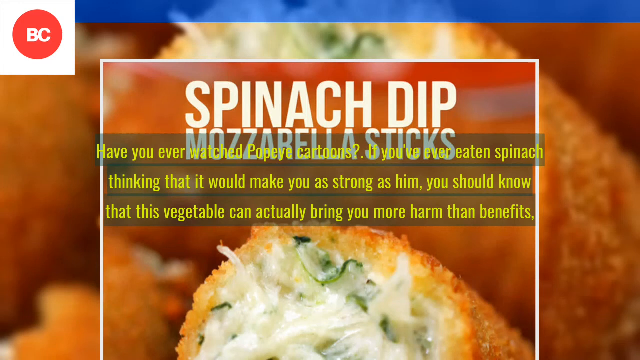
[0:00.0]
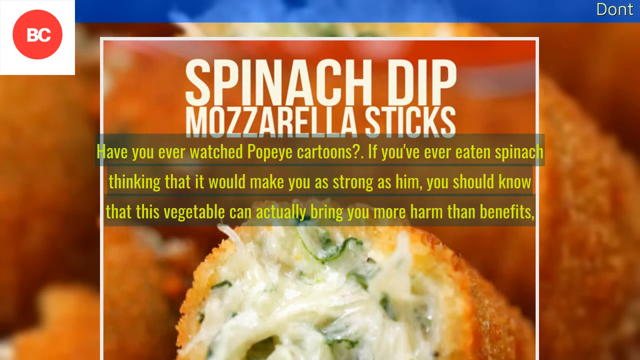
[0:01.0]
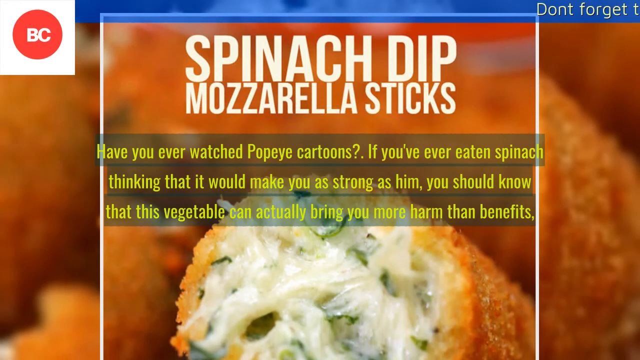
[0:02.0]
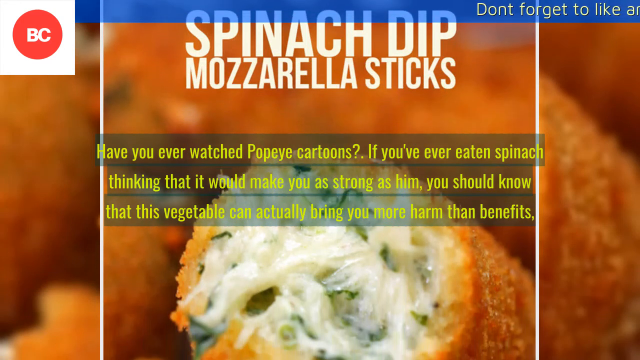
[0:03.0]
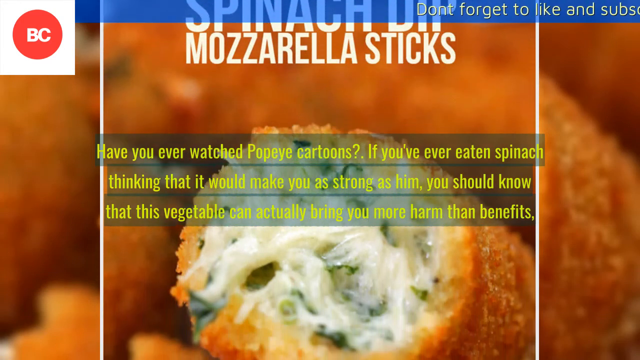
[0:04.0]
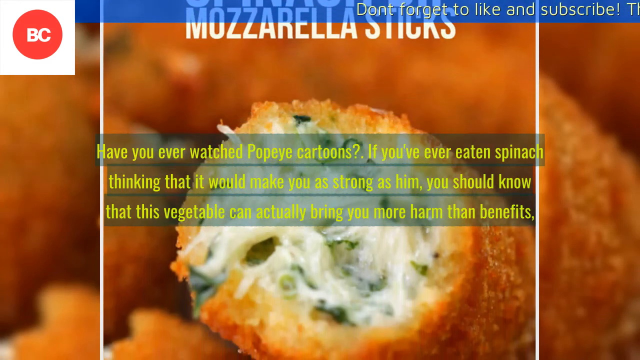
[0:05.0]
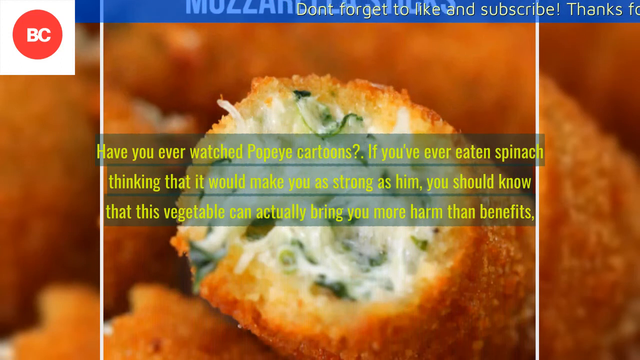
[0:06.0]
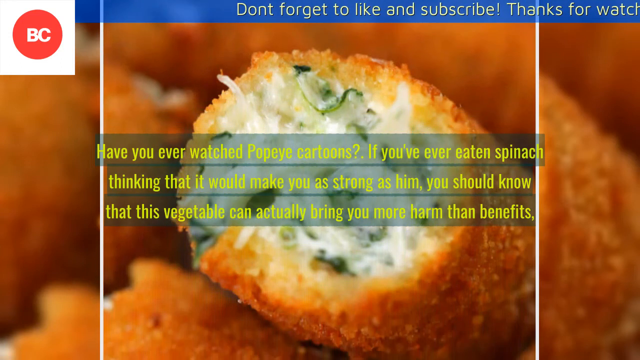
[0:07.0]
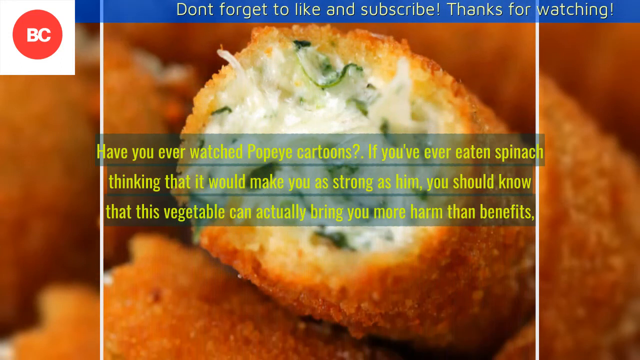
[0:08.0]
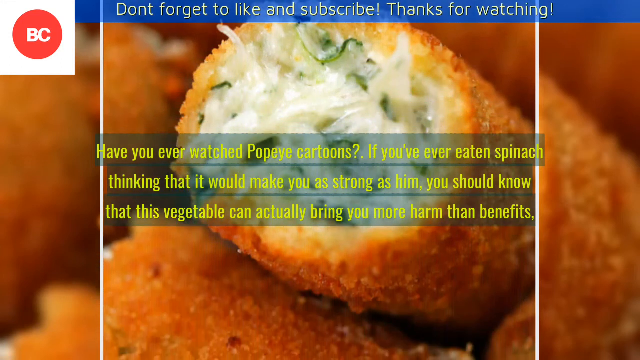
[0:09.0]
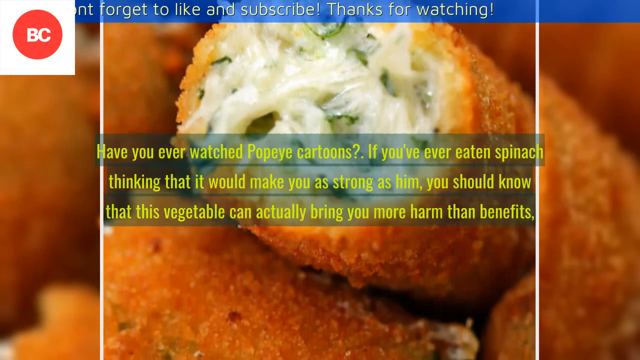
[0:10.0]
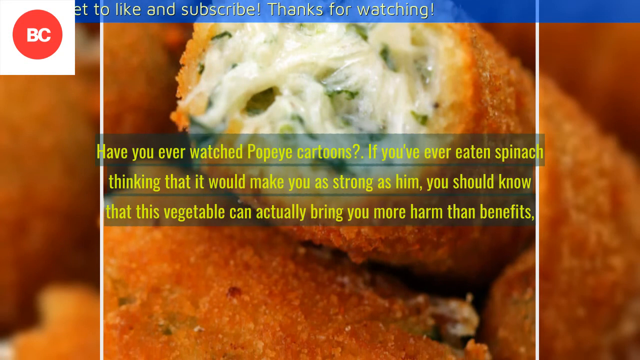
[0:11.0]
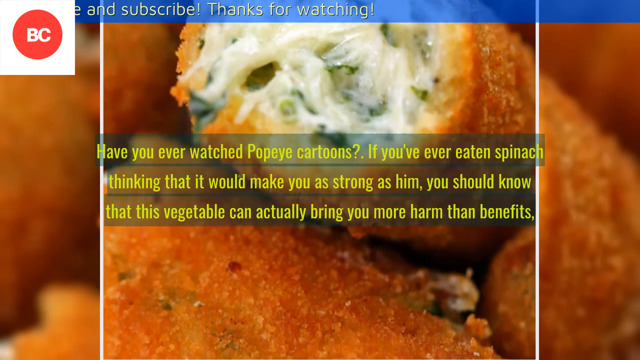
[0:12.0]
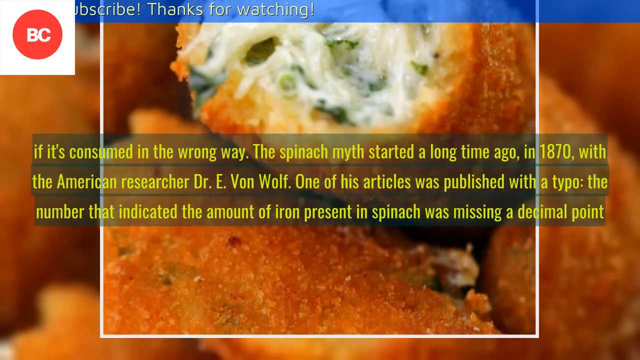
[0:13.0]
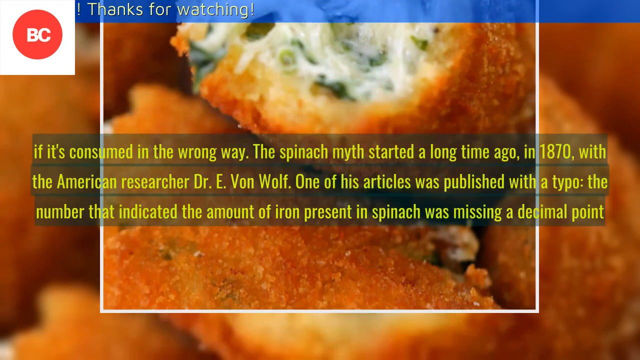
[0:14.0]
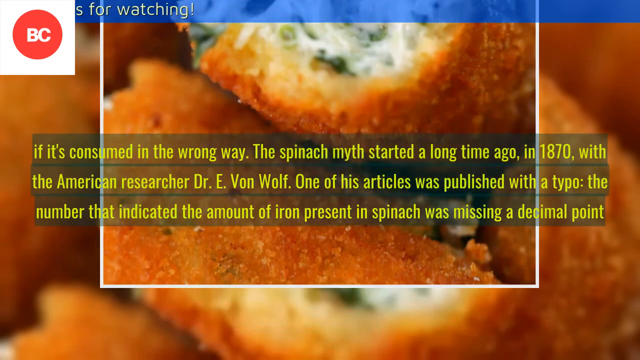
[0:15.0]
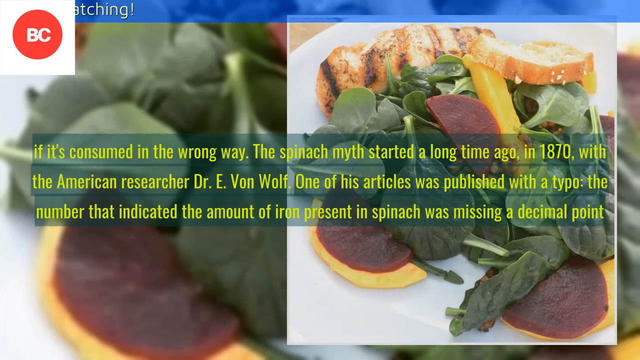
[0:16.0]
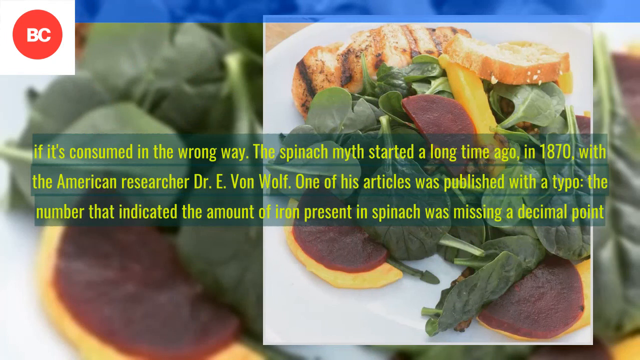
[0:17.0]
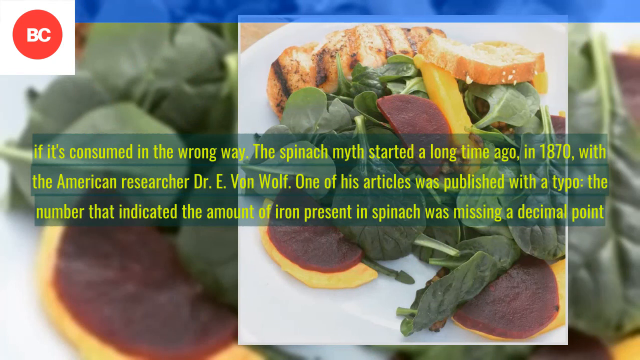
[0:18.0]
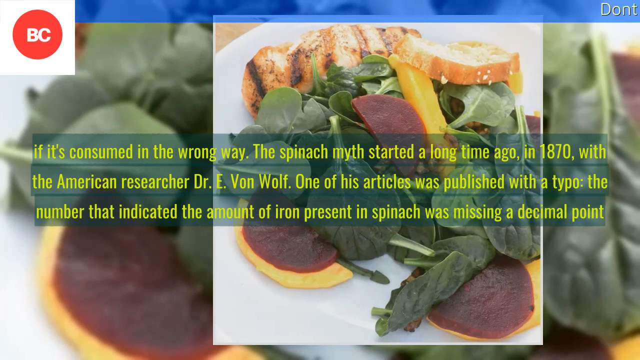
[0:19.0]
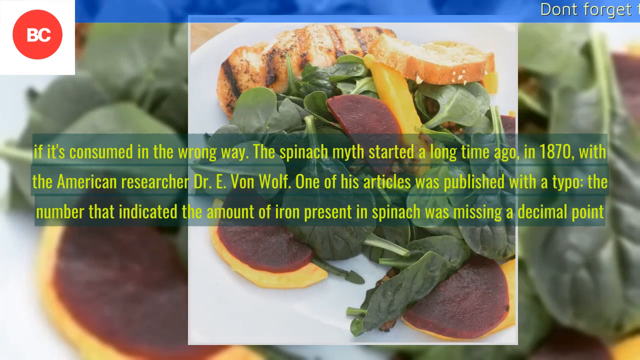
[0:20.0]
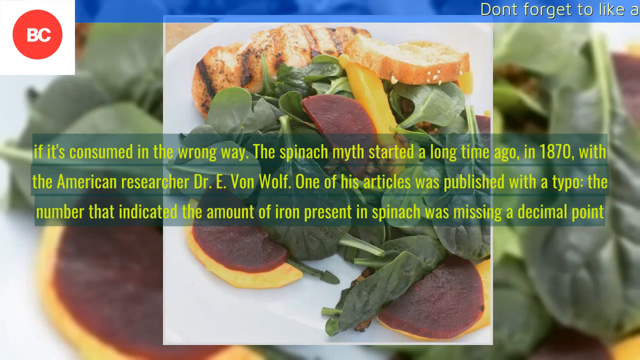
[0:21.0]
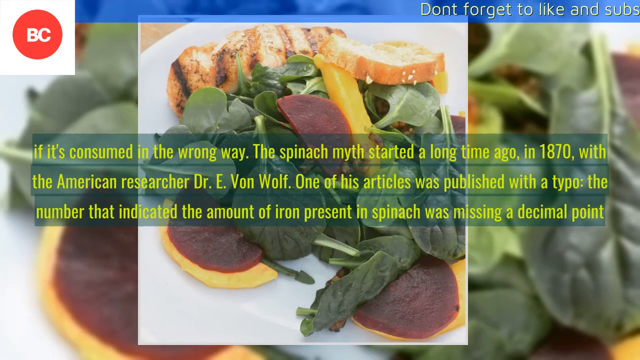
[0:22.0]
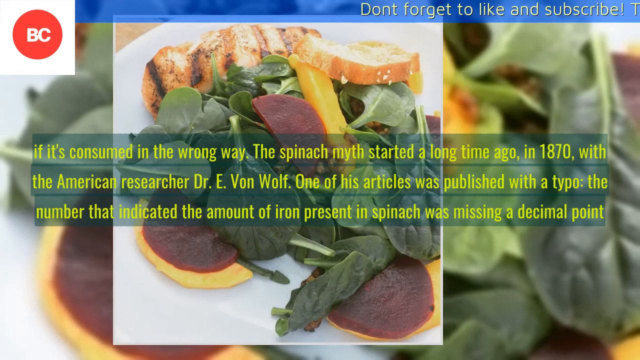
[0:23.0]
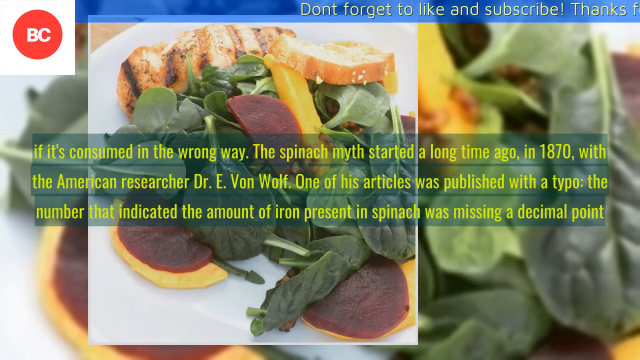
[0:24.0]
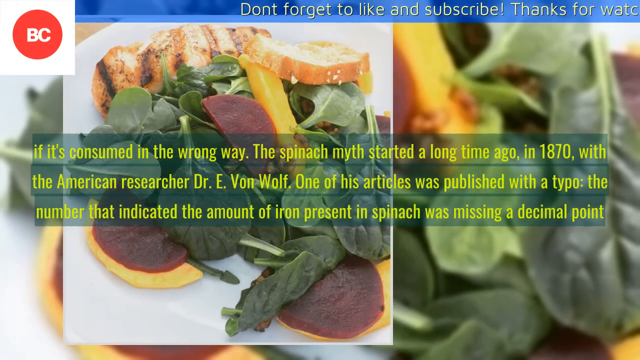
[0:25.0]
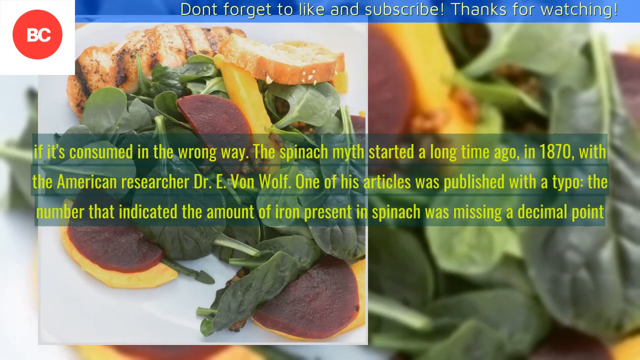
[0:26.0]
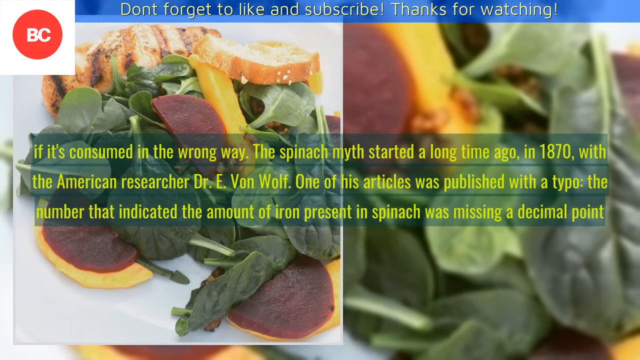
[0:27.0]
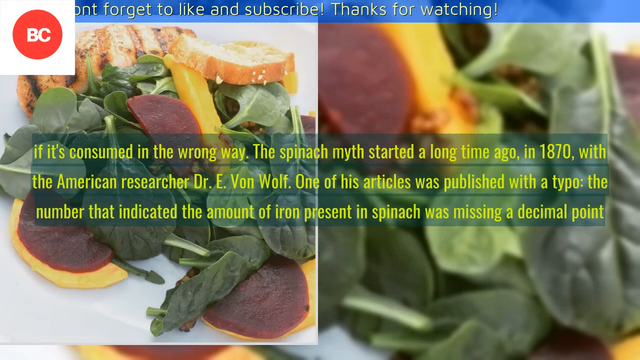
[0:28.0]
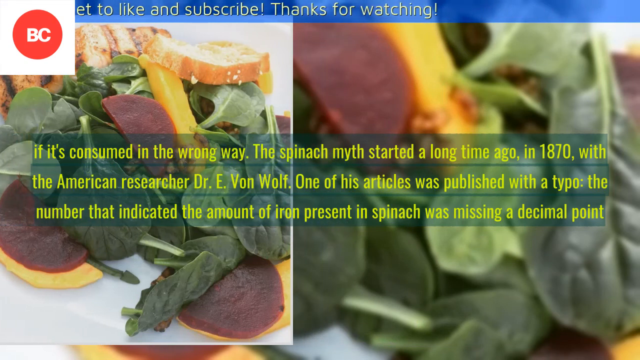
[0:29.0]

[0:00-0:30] An image of spinach dip mozzarella sticks fills the background, and in the foreground, at the top center, text reads "spinach dip mozzarella sticks." In the top left there is a circular logo reading "BC." In the center, small yellow text reads "Have you ever watched Popeye cartoons? If you've ever eaten spinach, thinking that it would make you as strong as him, you should know that this vegetable can actually bring you more harm than benefits." The spinach dip mozzarella sticks begin to move upwards across the screen while text at the top of the screen slides left. The video pans down the mozzarella sticks, and then another image of more spinach dishes appears, moving left across the screen. More text appears on the screen about why spinach is not healthy. In the background, the image slides left across the screen while a zoomed-in version of it is also shown behind.